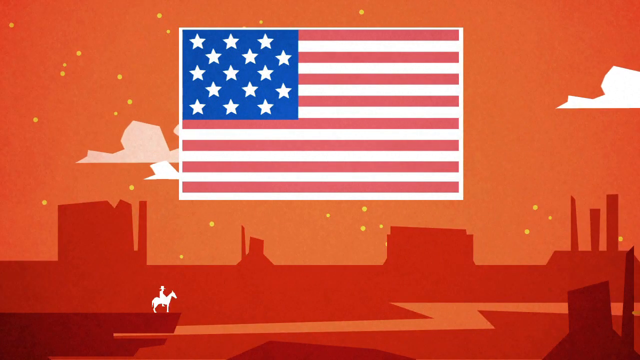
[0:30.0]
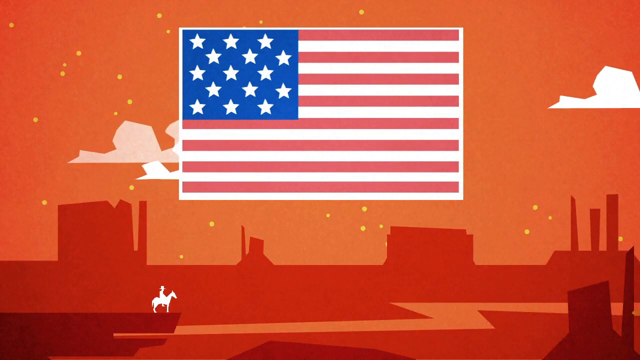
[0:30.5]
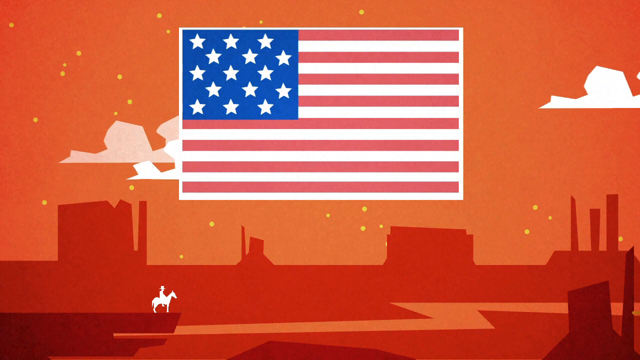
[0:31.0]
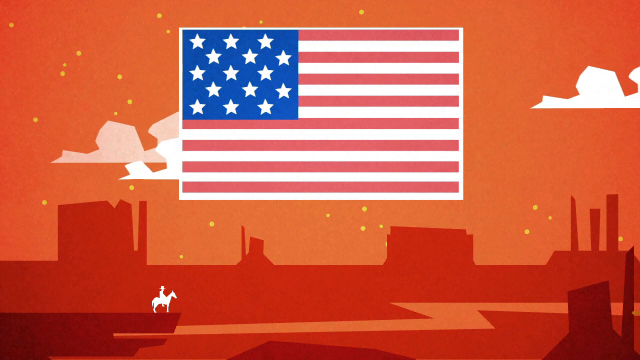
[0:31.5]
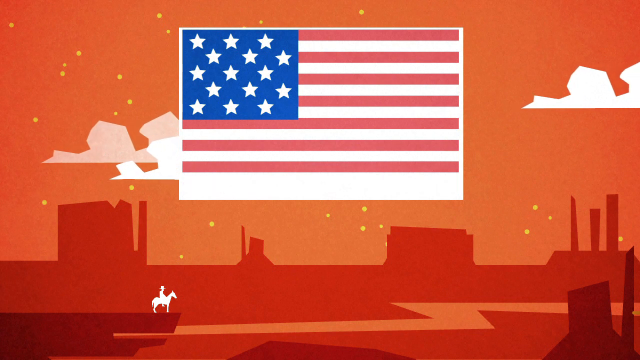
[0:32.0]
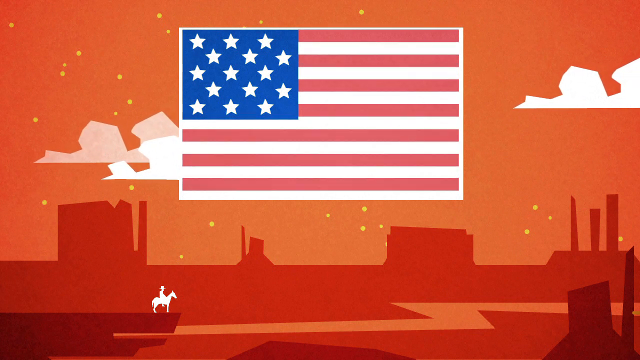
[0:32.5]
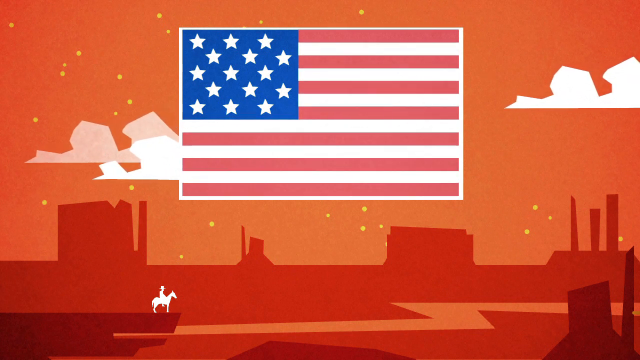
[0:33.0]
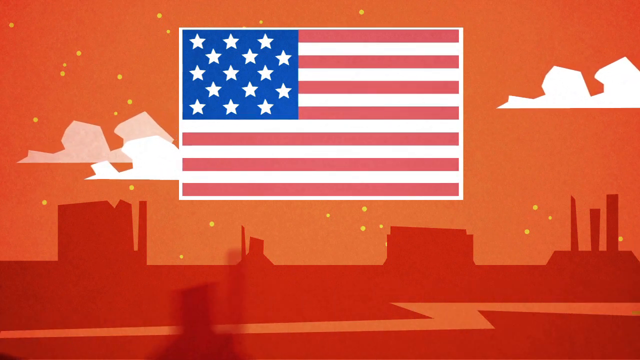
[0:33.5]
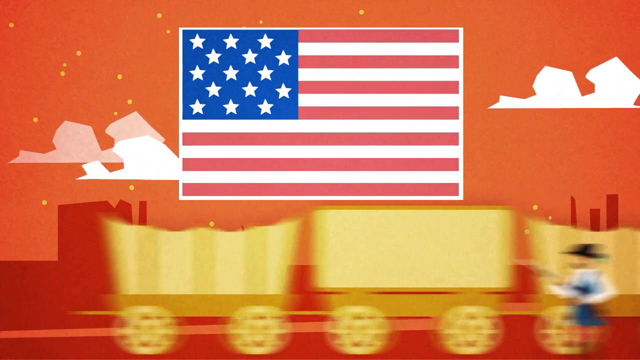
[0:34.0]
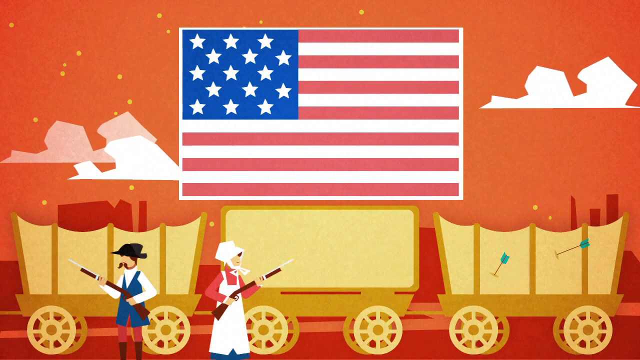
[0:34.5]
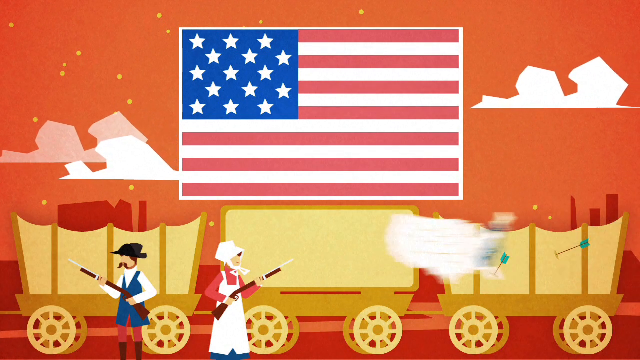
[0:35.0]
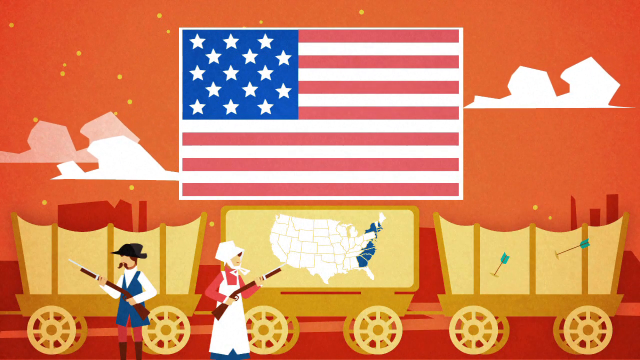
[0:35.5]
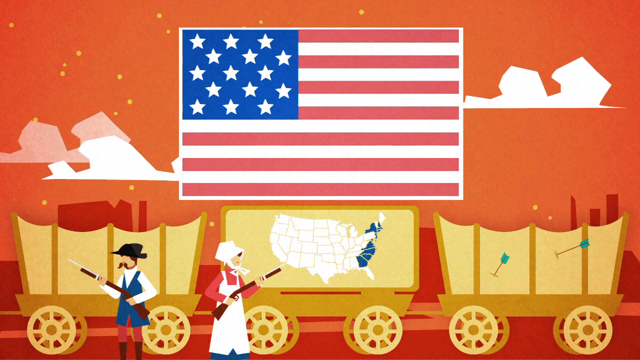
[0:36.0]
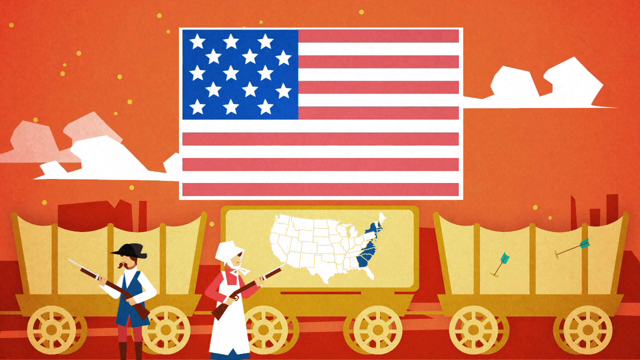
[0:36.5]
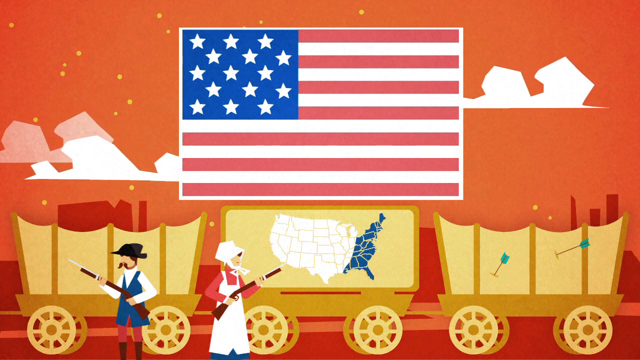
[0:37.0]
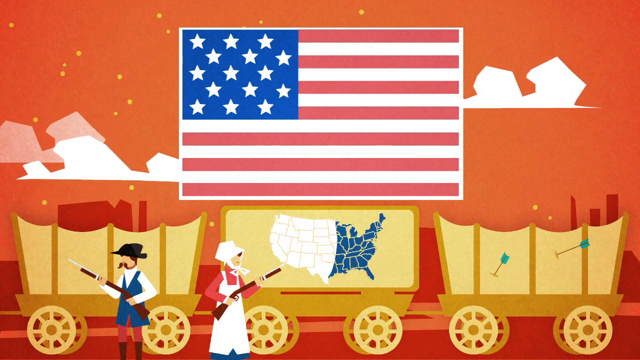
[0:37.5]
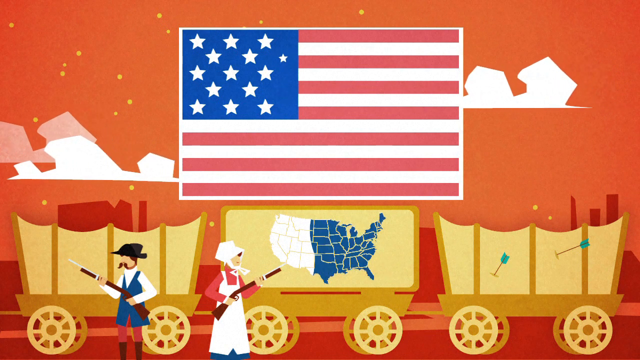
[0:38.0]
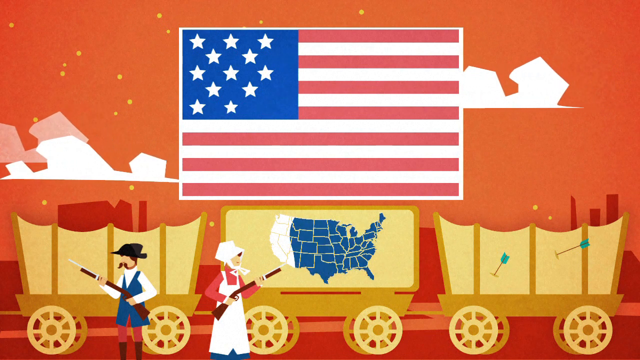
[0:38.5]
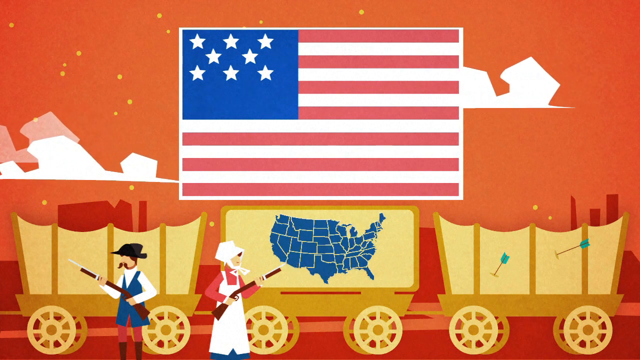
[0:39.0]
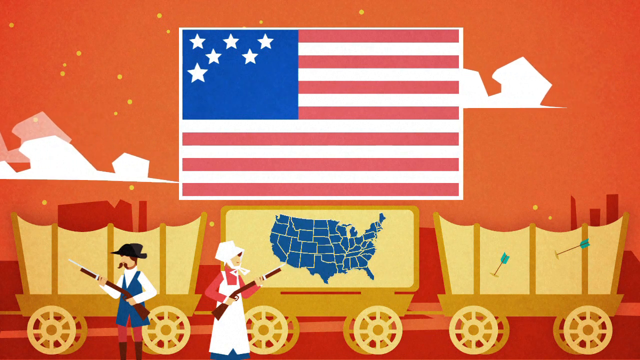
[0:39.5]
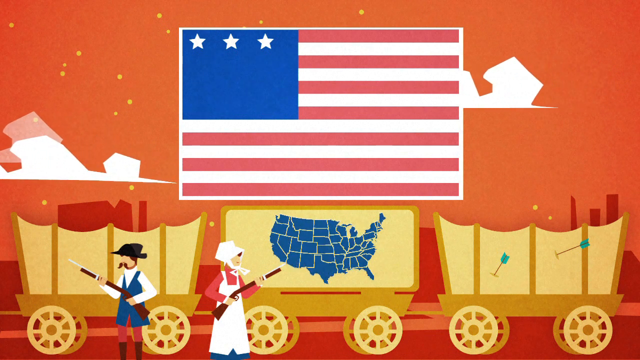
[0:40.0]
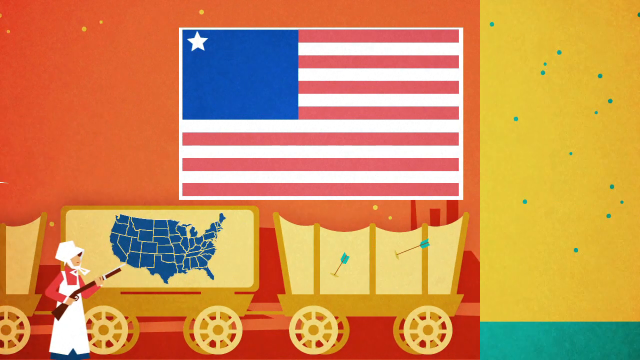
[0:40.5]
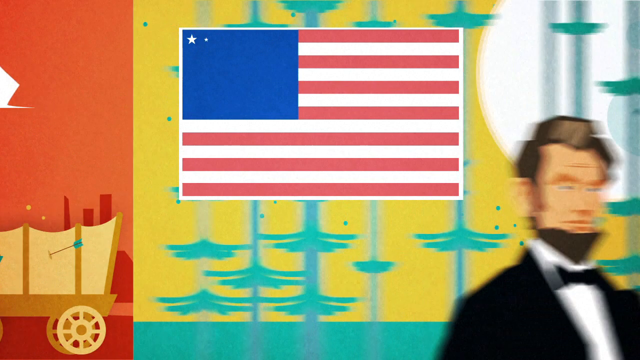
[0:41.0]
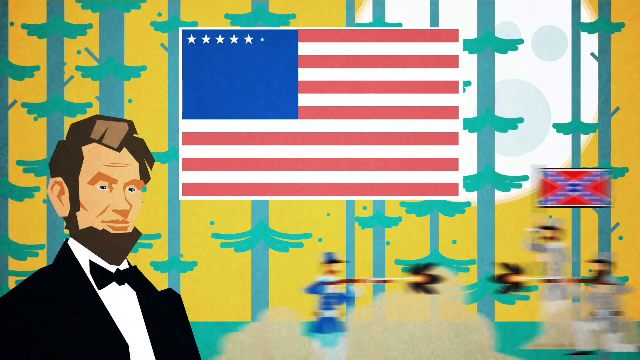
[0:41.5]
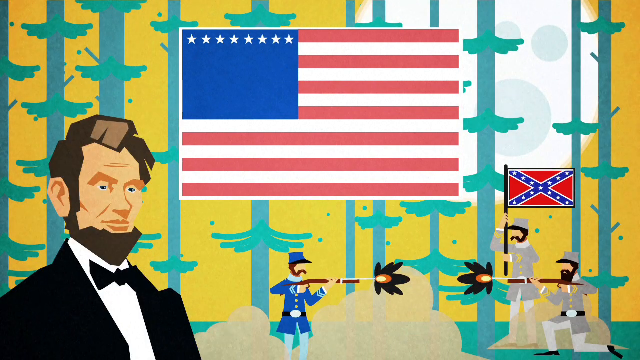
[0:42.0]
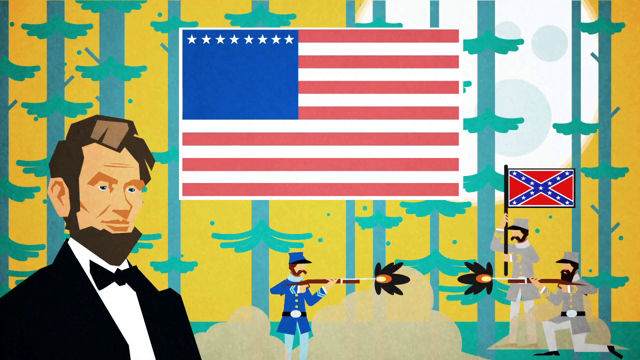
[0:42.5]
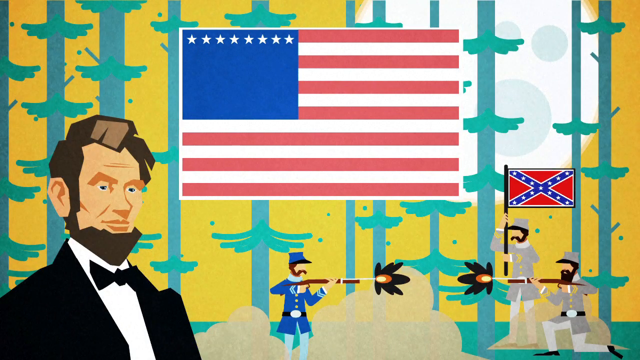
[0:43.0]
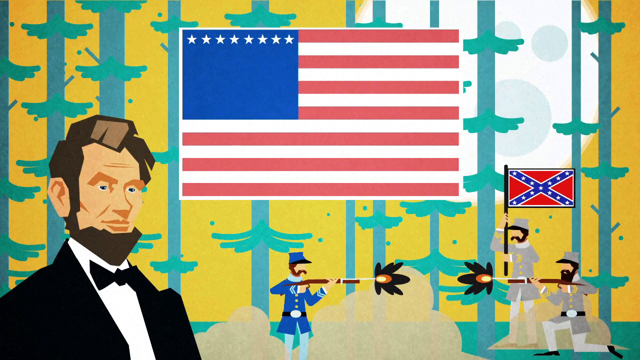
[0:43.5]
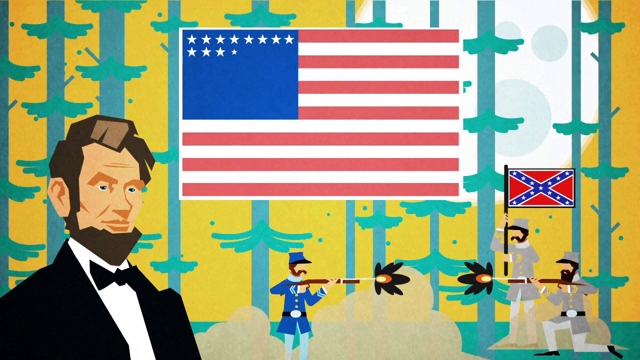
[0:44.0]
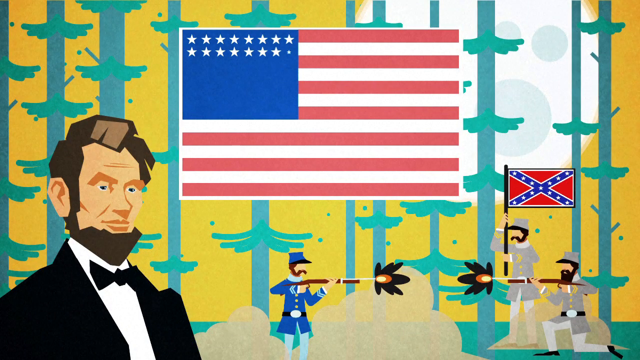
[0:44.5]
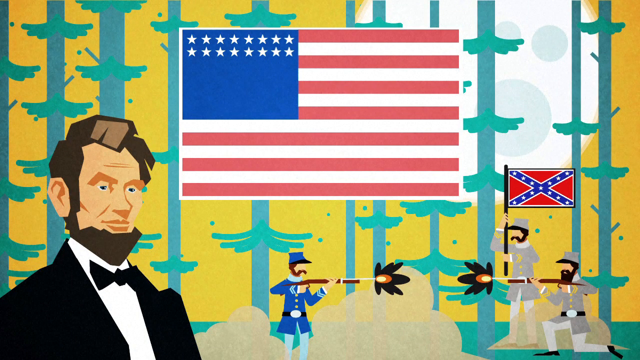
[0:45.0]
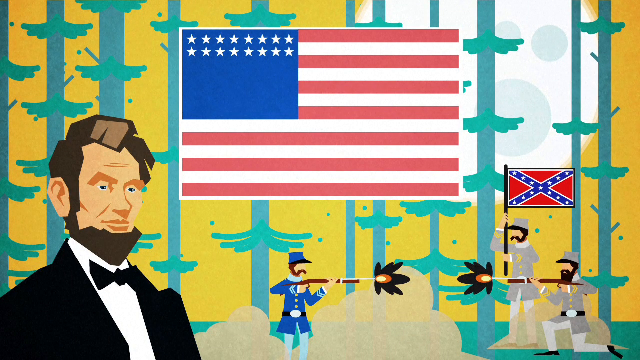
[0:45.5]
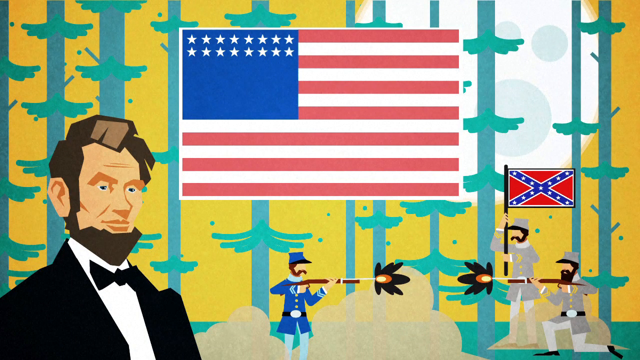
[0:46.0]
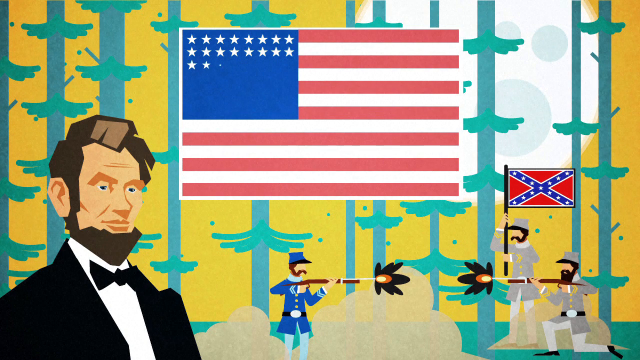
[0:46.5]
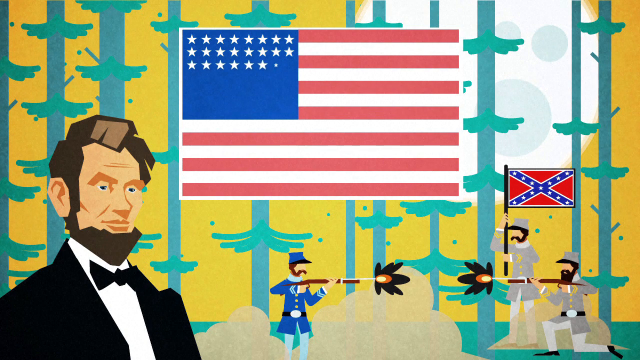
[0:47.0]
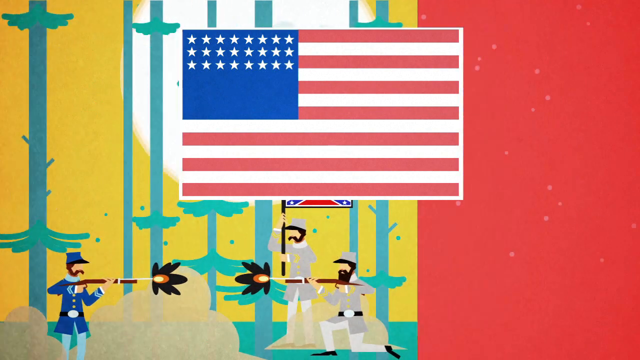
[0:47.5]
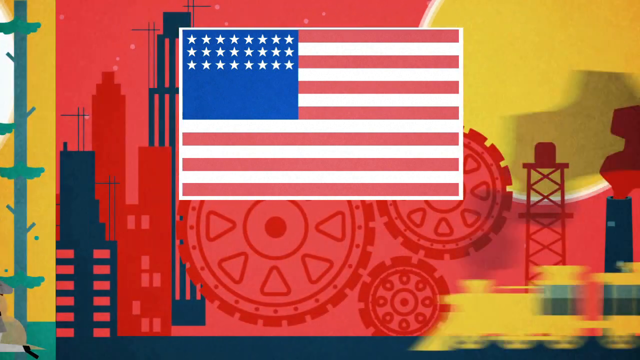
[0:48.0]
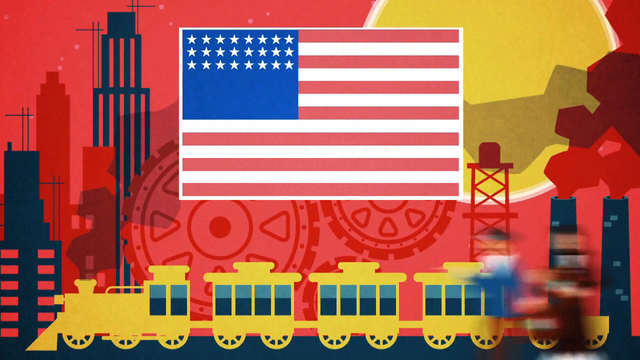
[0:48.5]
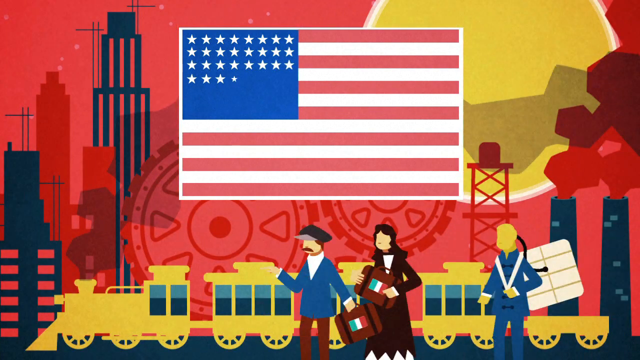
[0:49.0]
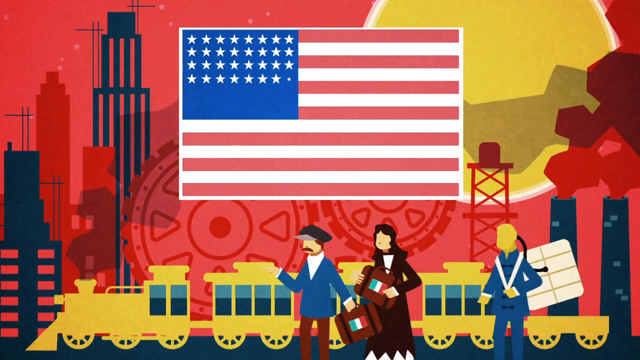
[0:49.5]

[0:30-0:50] The animation consists of colorful graphical illustrations that transition rapidly across the screen. The American flag stays static, with the number of stars and the stripes changing at times throughout. An orange sky appears, with an orange hue covering the rooftops and white clouds floating by. Next, the American flag changes as one of the stripes disappears, and 15 stars are visible. A wagon train of three wagons then scrolls from left to right. A man with a mustache and a woman with a white bonnet on her hair are both holding guns and pointing them, the man to the left and the woman to the right. Arrows appear, two of them fired onto the wagon on the right. A blue map of the United States then appears on the middle wagon. Next, the stars on the large American flag in the middle change, increasing as more stars are added.